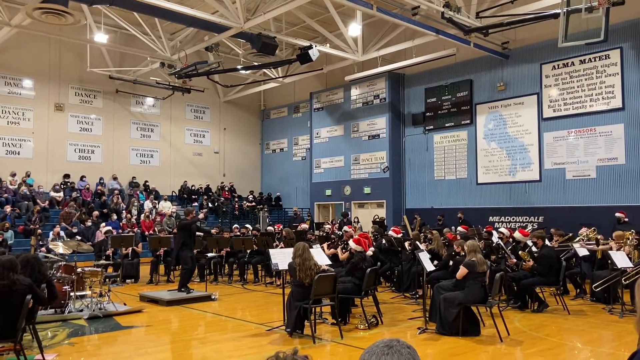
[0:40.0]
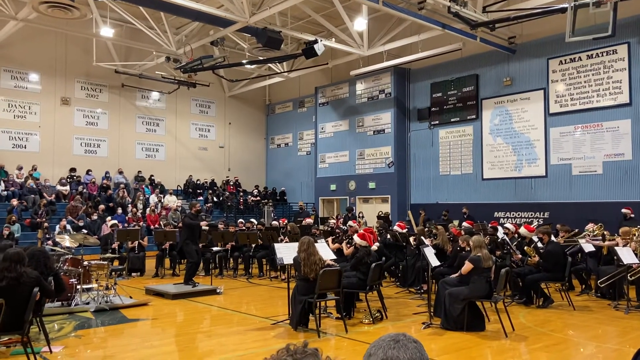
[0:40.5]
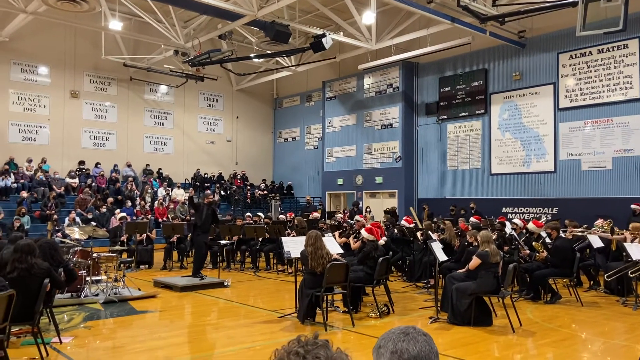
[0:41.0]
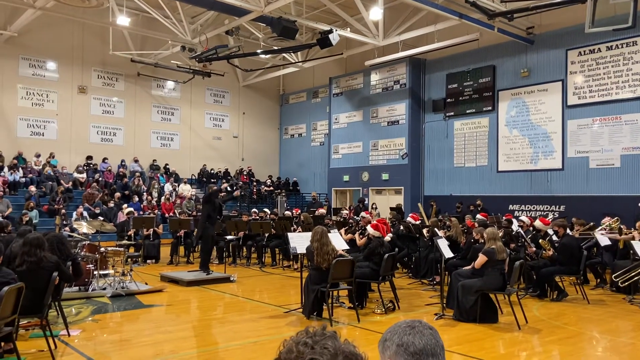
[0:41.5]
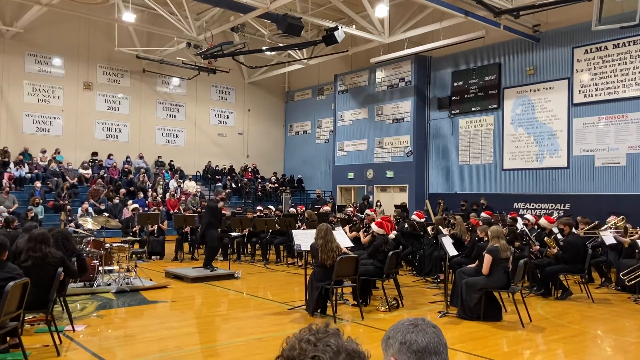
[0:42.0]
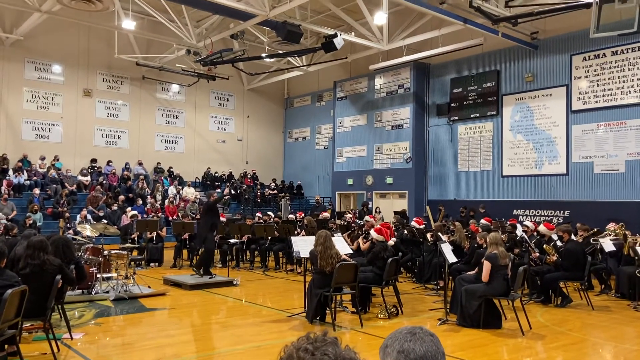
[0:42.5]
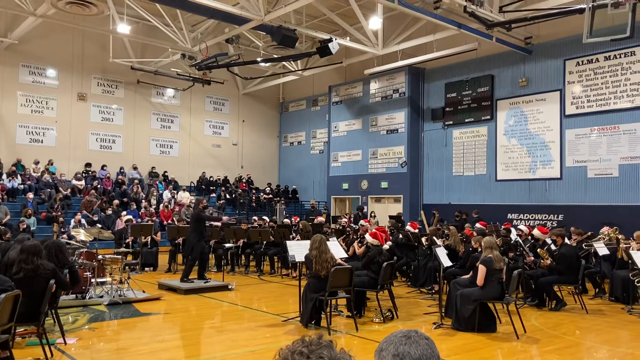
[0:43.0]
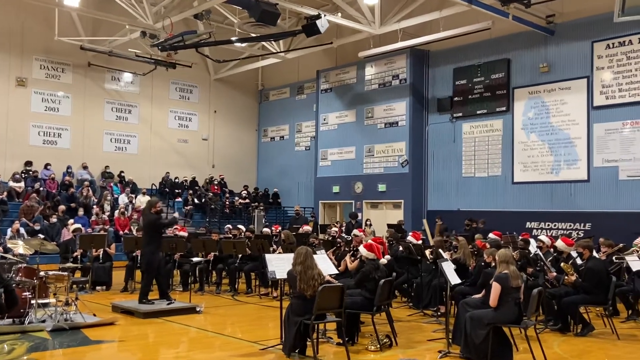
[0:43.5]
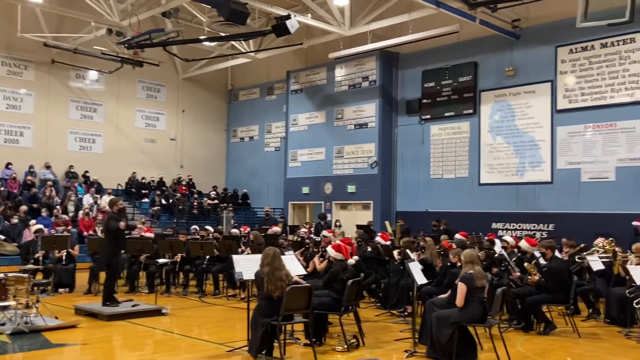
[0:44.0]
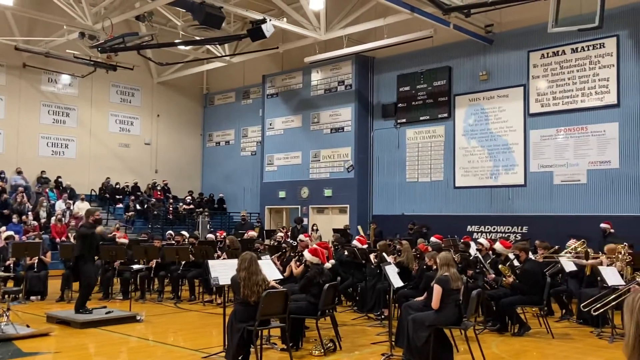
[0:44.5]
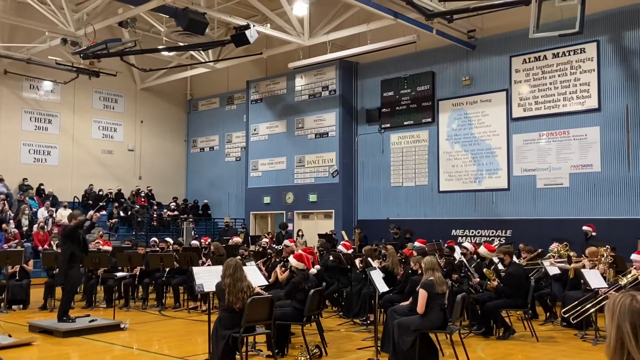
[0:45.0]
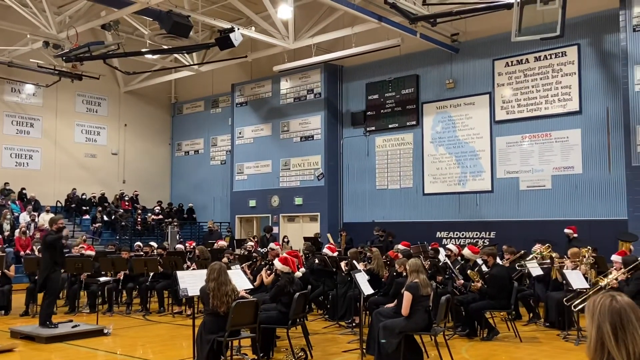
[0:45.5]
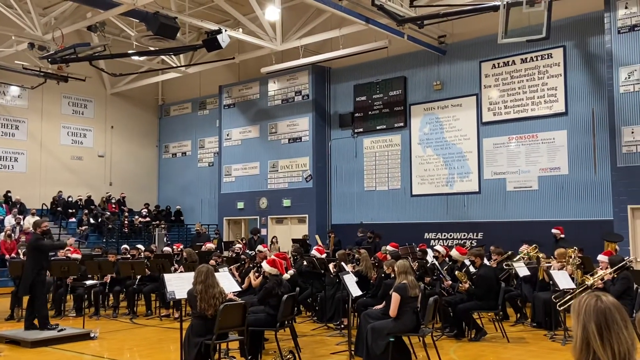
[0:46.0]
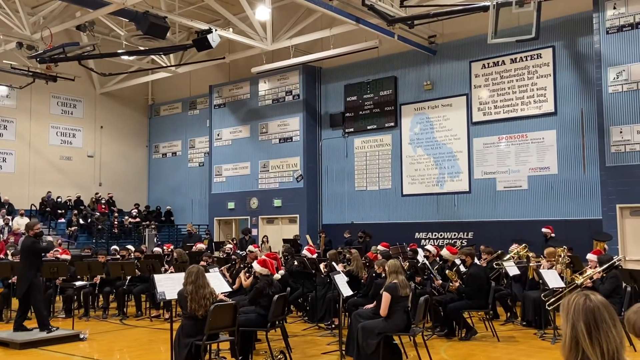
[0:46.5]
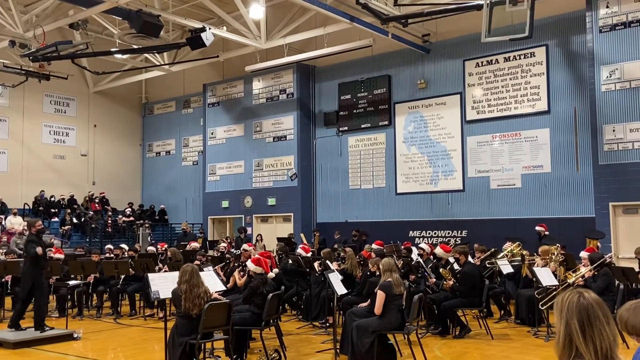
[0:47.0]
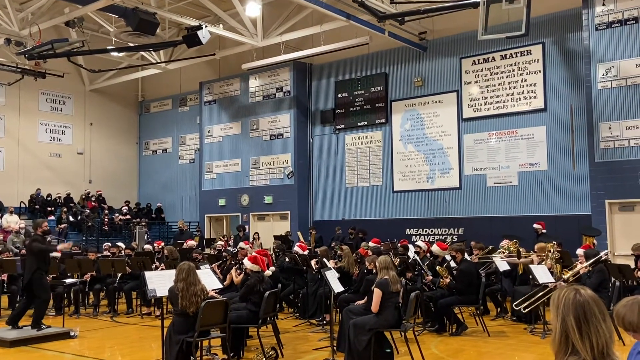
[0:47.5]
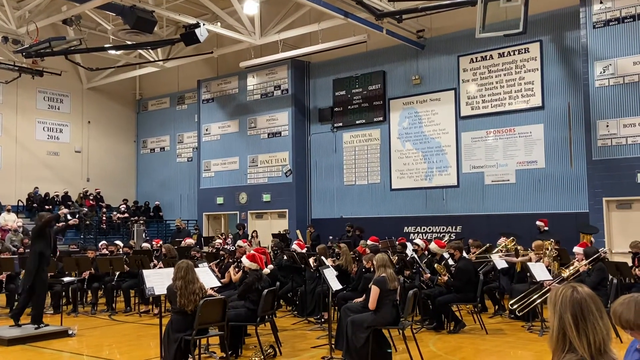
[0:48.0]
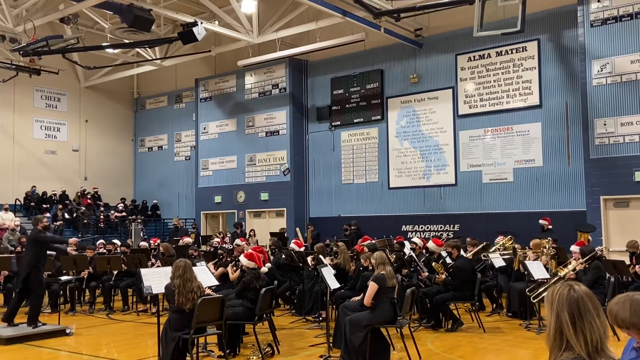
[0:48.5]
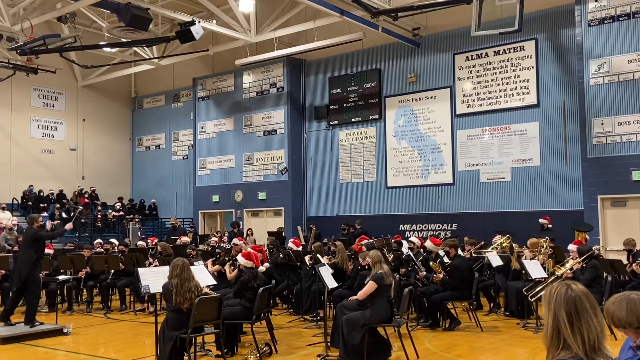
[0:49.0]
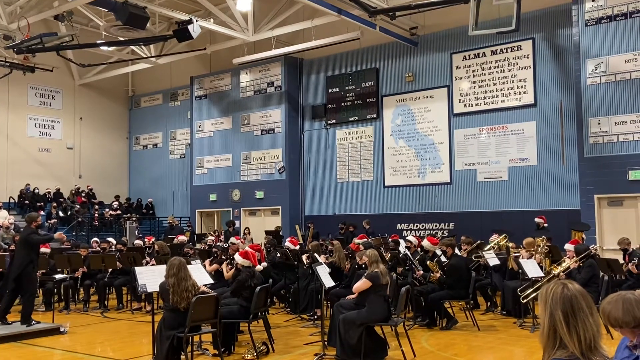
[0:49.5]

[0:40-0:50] In a gym with a shiny floor painted with lines like a basketball court, what appear to be students sit on black chairs, all wearing black. Some of the girls wear black skirts and black shirts, and the guys wear black pants and black shirts. A few people wear red and white Santa hats, suggesting this could be a high school Christmas concert. The camera moves around a little and then zooms in on the students. People are playing the trombone, and the conductor is in front of them on a little stage.